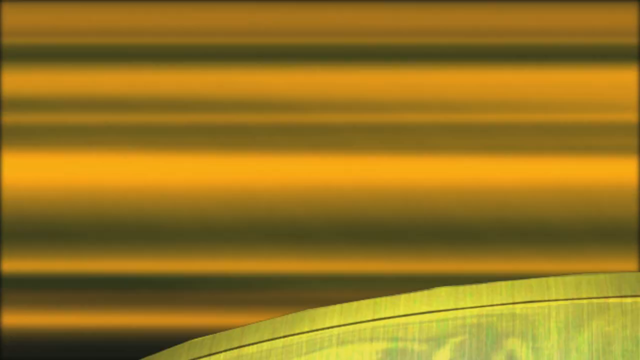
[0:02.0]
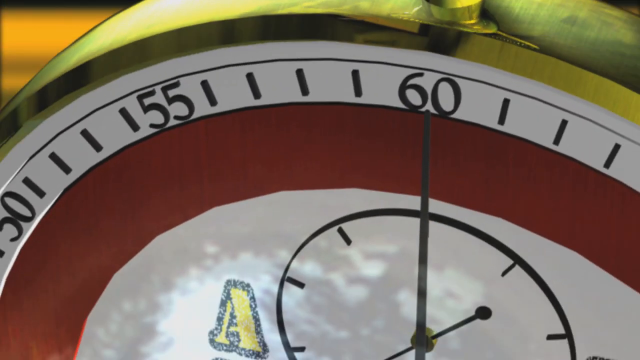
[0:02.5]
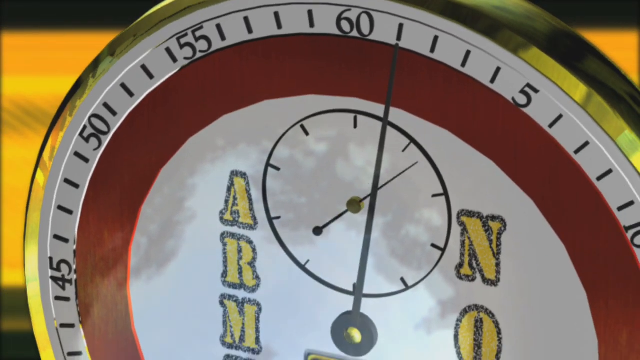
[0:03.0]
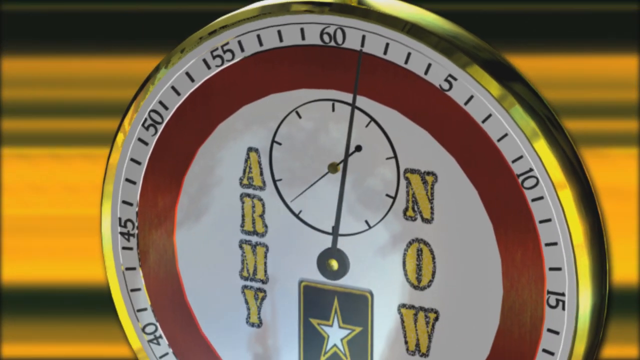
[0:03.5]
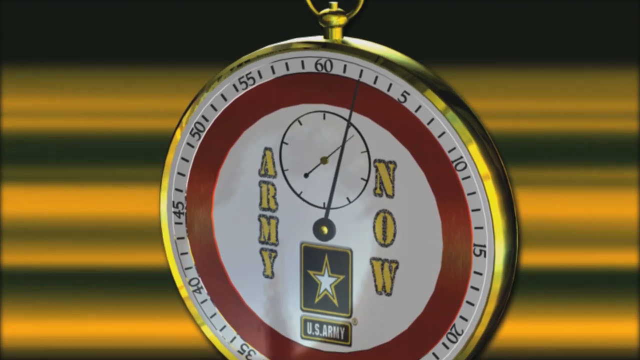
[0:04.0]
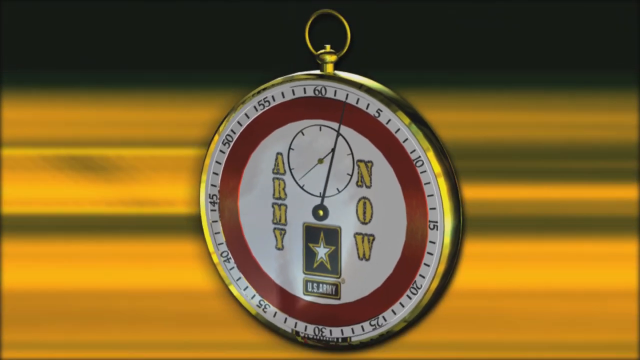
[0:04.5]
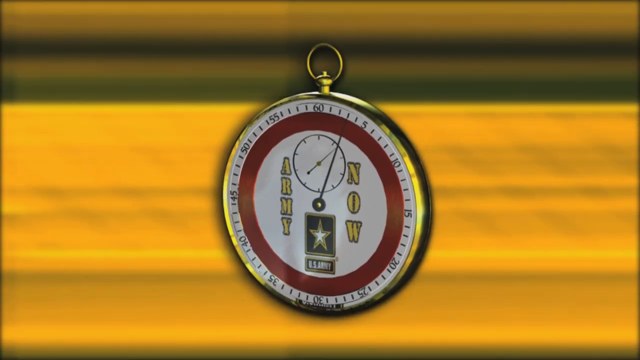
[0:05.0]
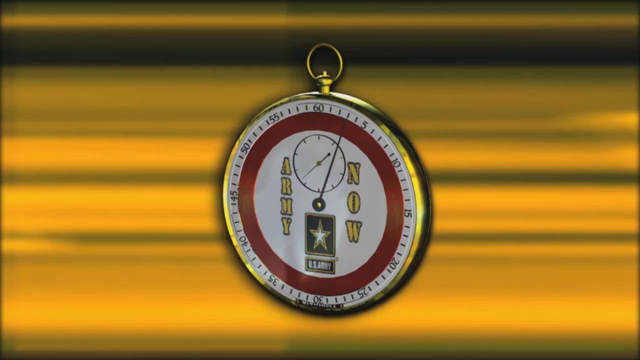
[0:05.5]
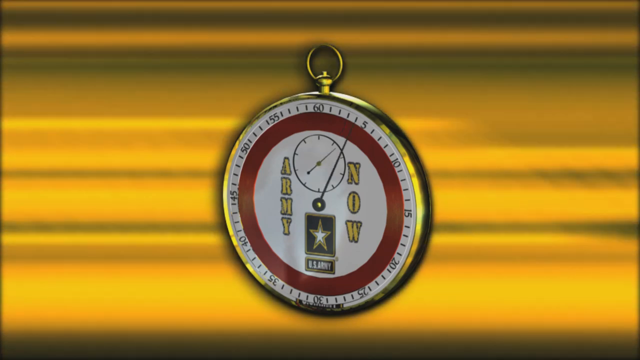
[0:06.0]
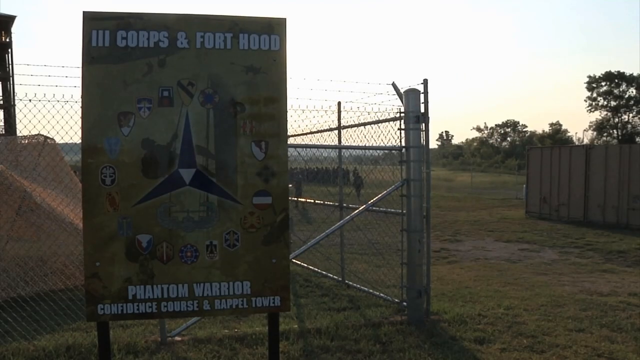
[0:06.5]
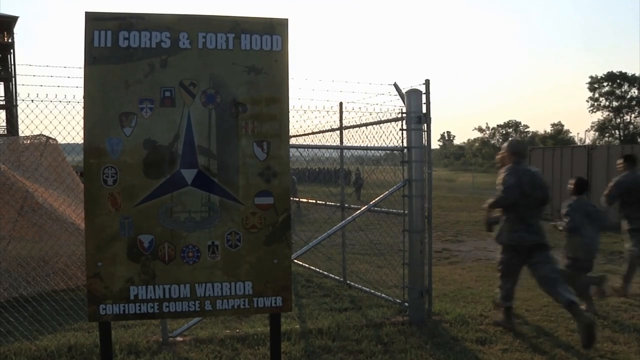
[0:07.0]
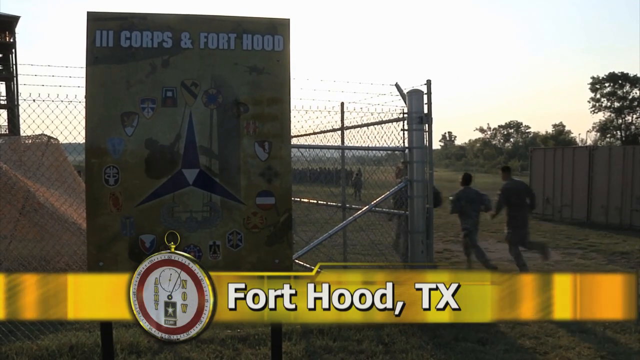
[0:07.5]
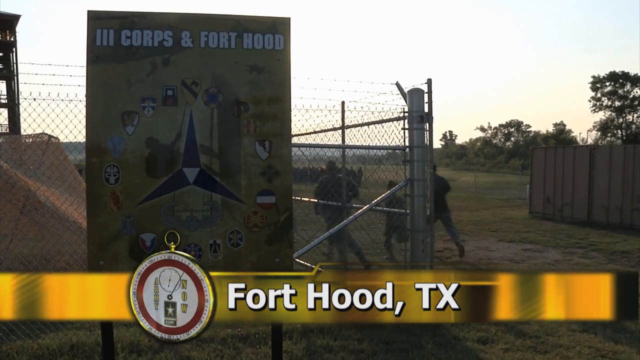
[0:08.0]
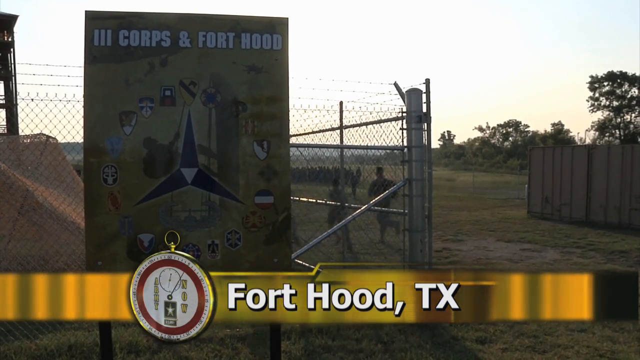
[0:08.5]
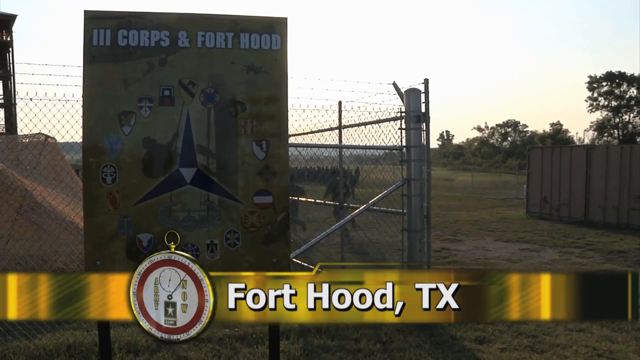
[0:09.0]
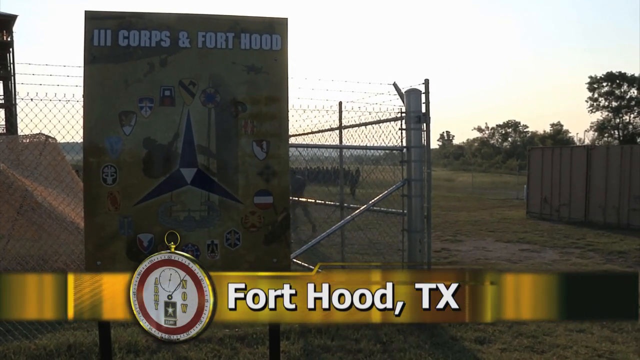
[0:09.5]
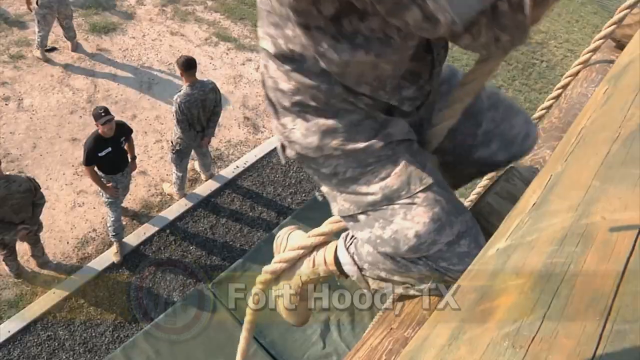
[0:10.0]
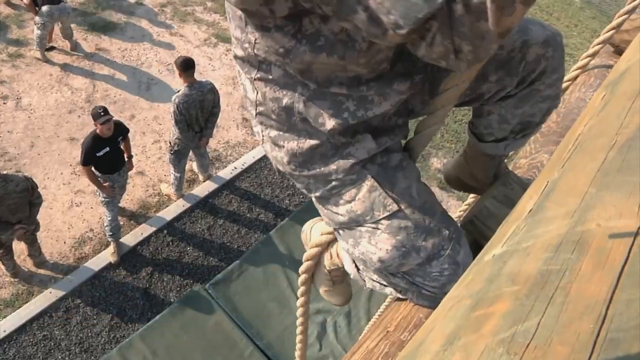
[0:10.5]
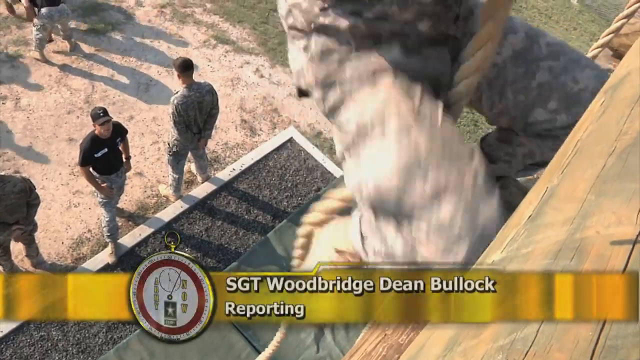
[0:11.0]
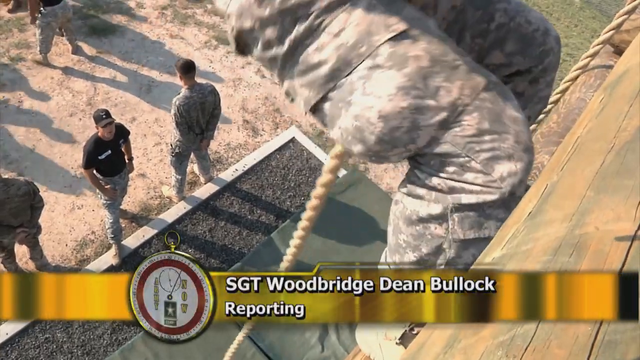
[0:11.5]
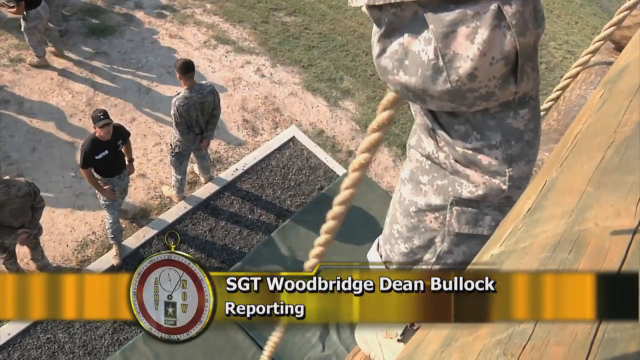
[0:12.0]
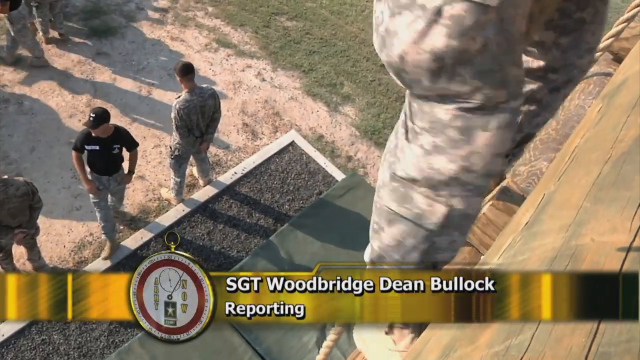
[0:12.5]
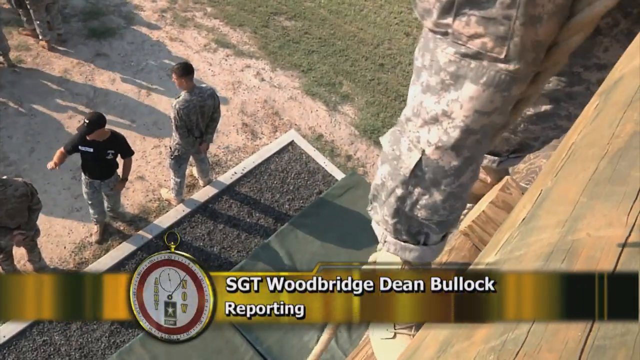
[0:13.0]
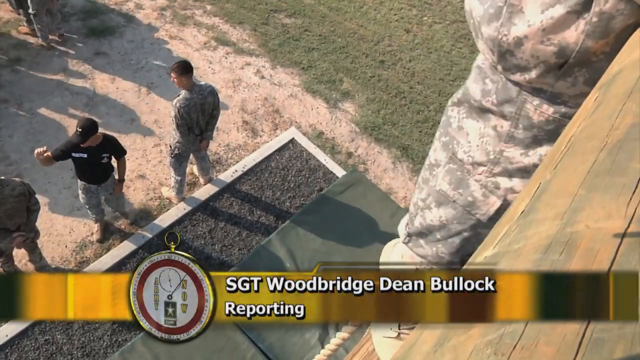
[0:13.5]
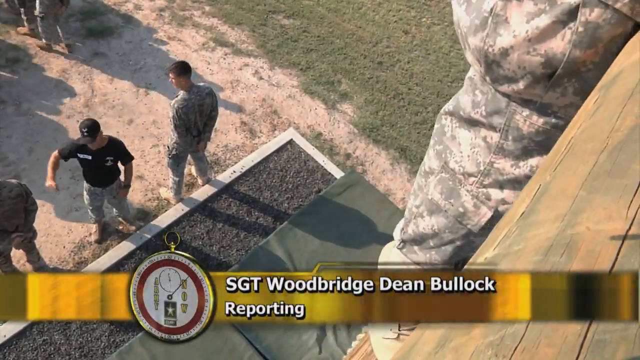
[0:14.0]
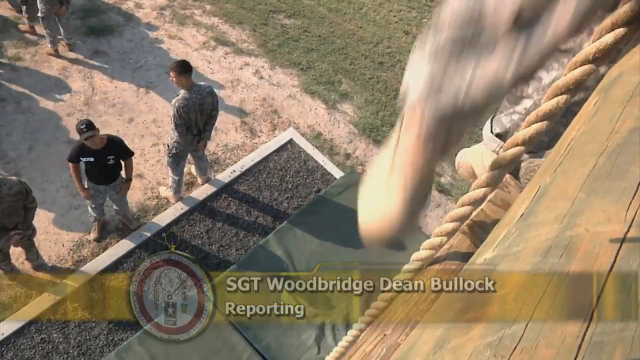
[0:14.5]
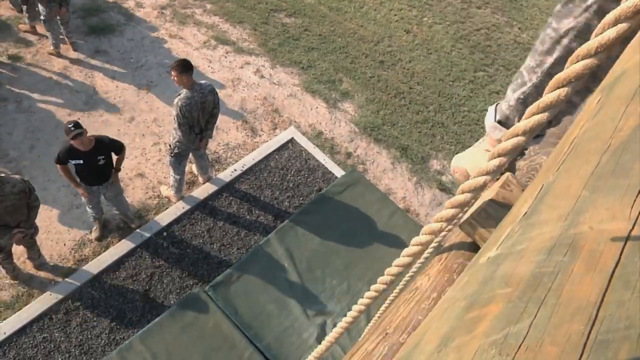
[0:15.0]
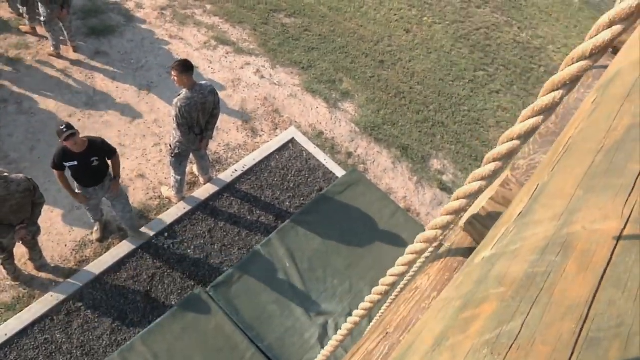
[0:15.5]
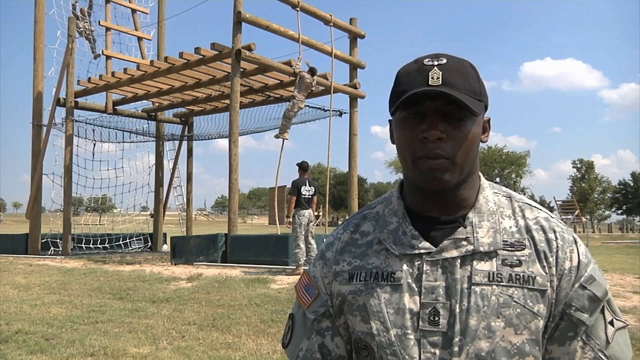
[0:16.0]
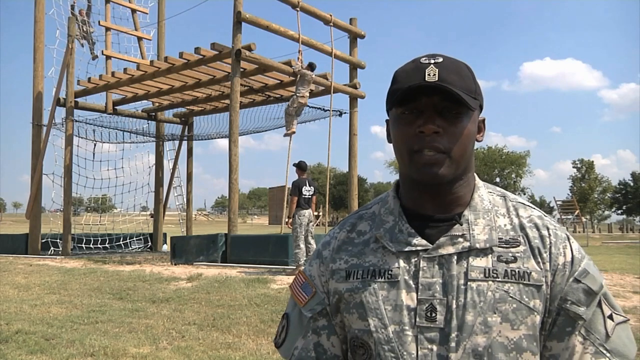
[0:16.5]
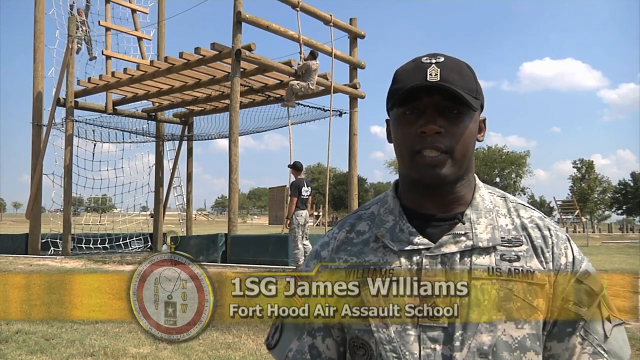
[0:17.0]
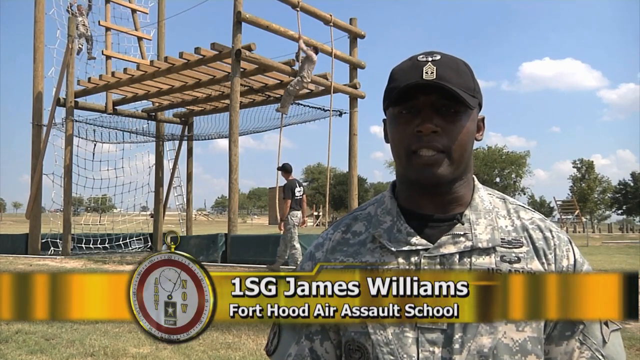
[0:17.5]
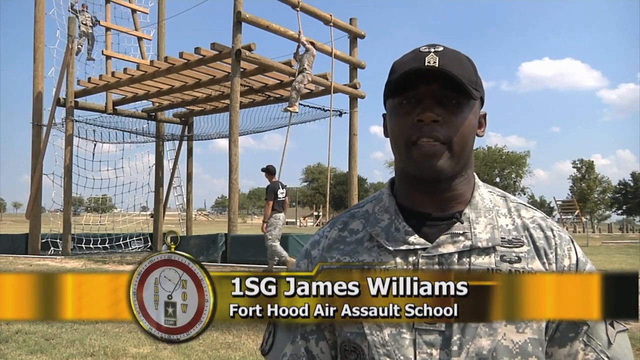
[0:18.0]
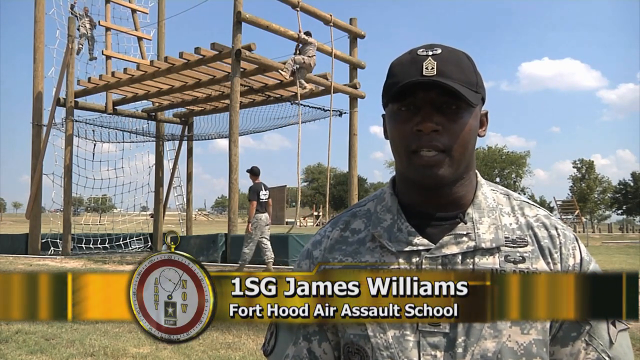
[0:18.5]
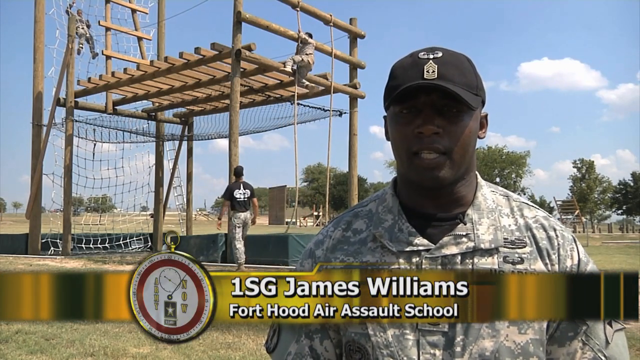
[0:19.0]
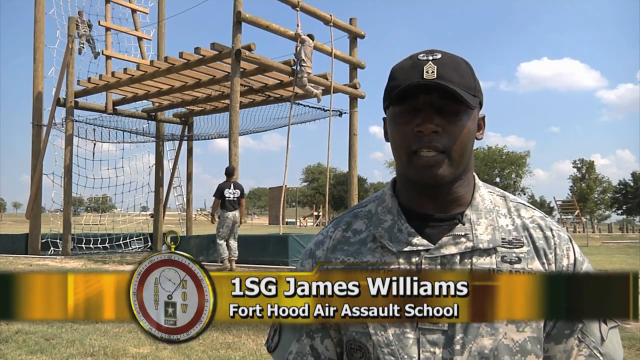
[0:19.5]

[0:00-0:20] A 3D animation of a compass flies into view, with "Army Now" on its face along with the Army logo. Streaking colors behind it look almost like speed lines. The video cuts to a fence with a poster on it that appears to say "III Corps and Fort Hood" and "Phantom Warrior," and it has insignia on it. Three men run past, and then the words "Fort Hood, Texas" appear at the bottom with the 3D compass. Next, a man climbs a climbing wall with a rope; only his legs are visible. He climbs with his left foot, then places his right foot and climbs a little higher. Three men are on the ground, and one of them looks up at the man as he climbs the wall. An African American man in military fatigues is then in front, speaking to the camera. In the background, three men are on an obstacle course: one climbs up, holding onto a rope with his left hand, another climbs a net, and the third is on the ground looking up at the others. The words "First Sergeant James Williams" appear at the bottom of the screen, with "Fort Hood Air Assault School" displayed underneath his name.